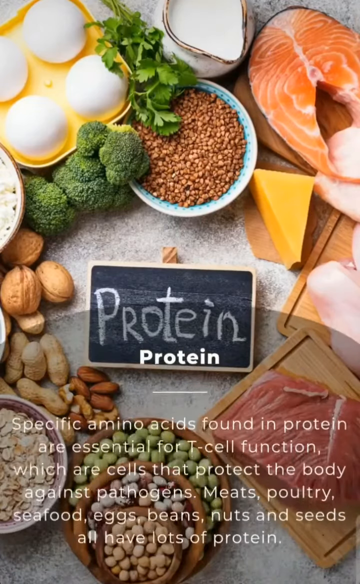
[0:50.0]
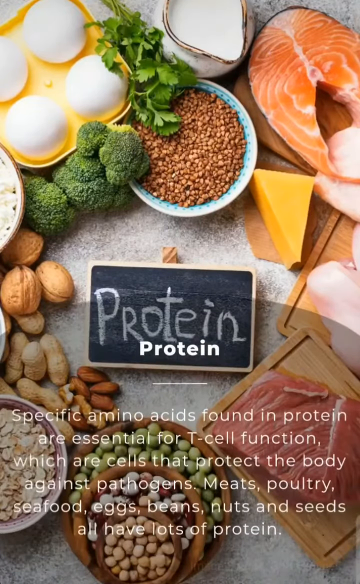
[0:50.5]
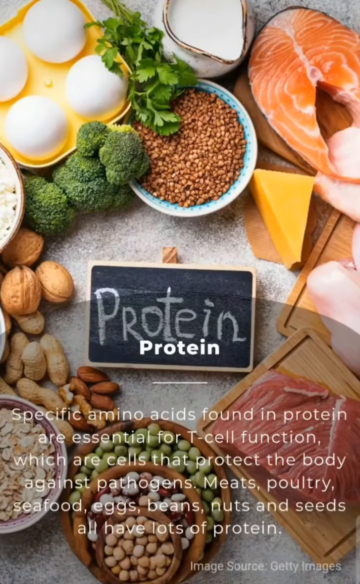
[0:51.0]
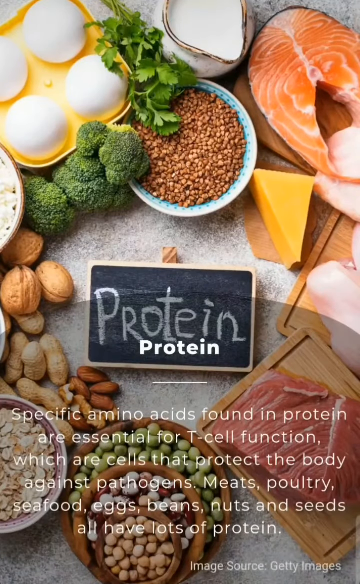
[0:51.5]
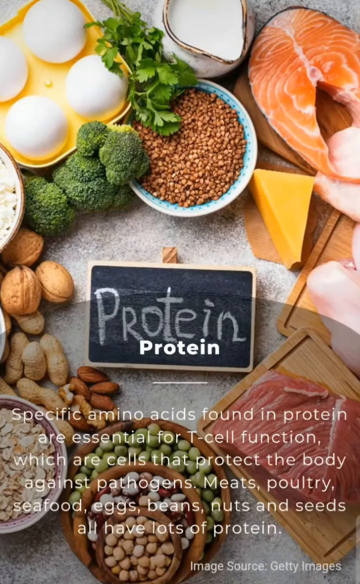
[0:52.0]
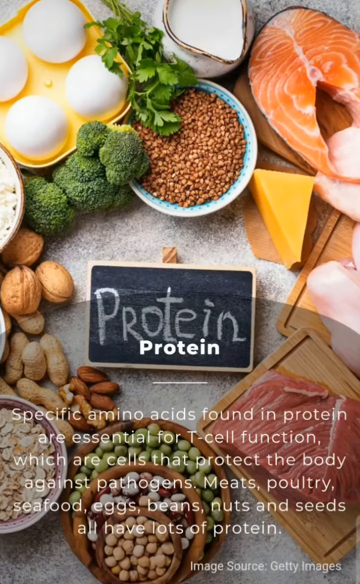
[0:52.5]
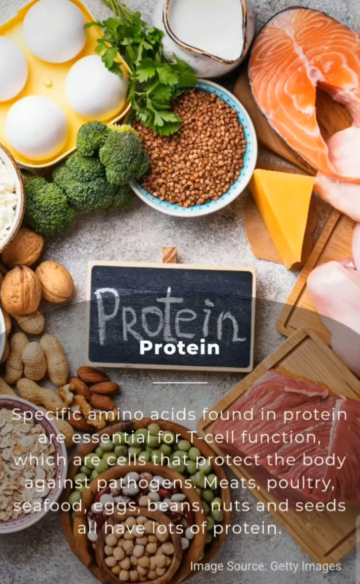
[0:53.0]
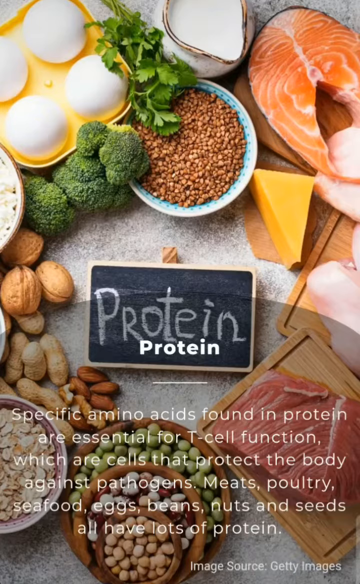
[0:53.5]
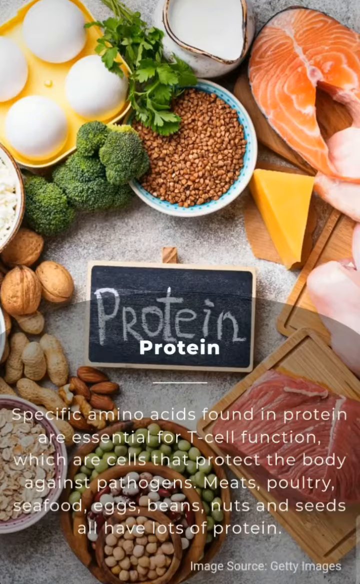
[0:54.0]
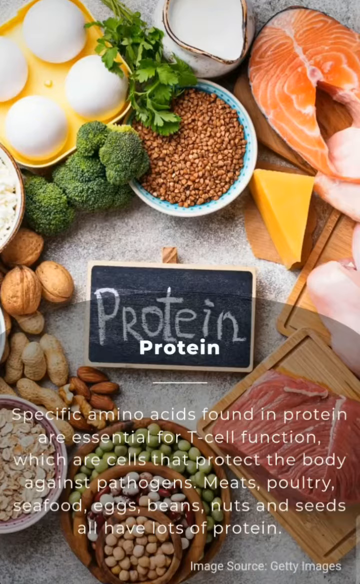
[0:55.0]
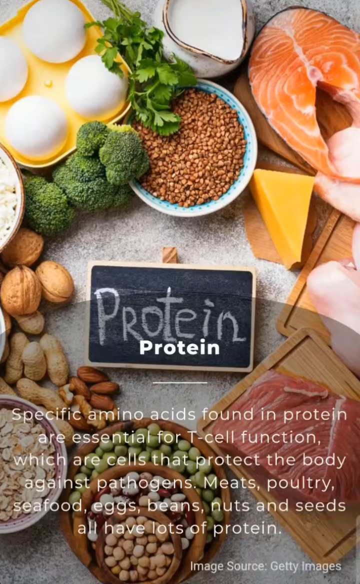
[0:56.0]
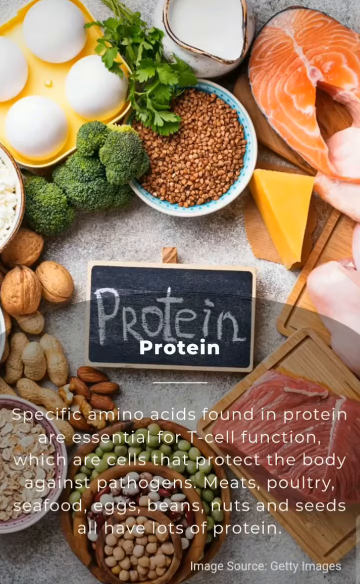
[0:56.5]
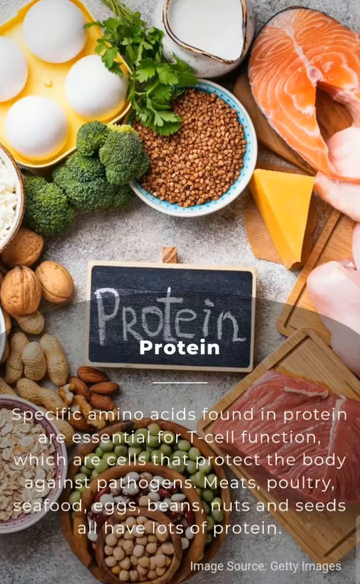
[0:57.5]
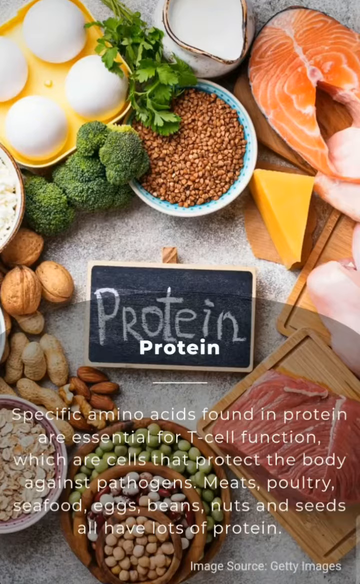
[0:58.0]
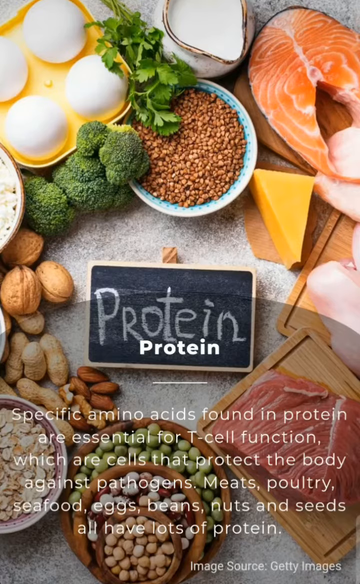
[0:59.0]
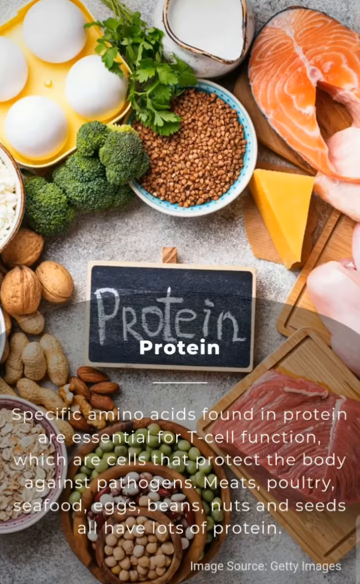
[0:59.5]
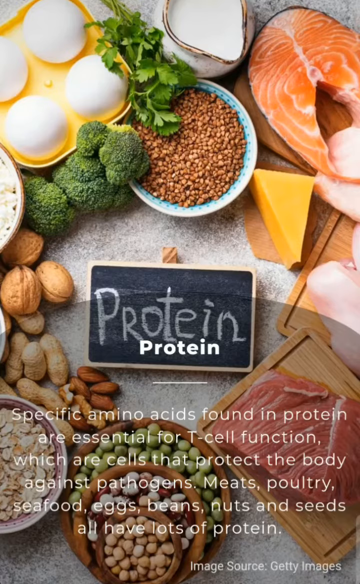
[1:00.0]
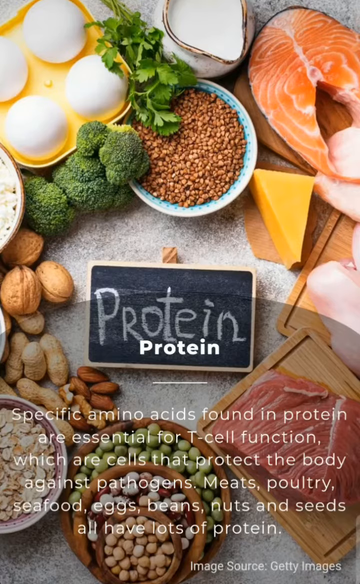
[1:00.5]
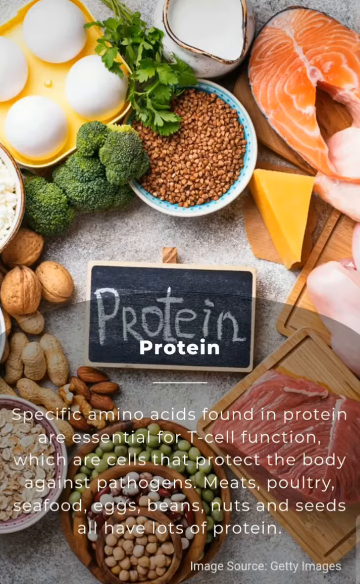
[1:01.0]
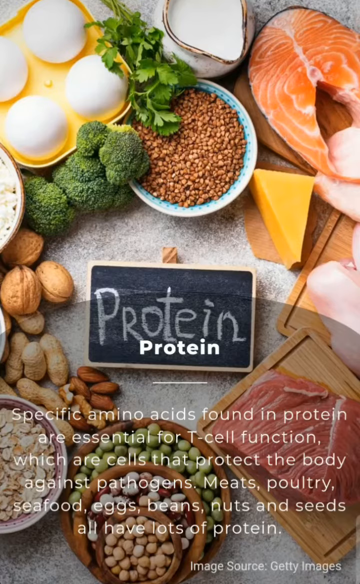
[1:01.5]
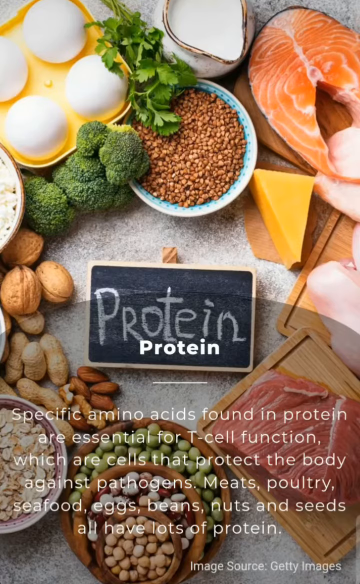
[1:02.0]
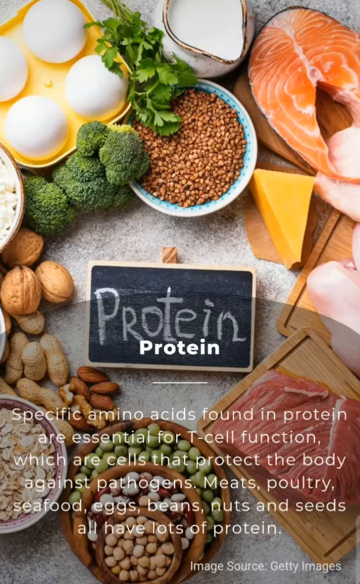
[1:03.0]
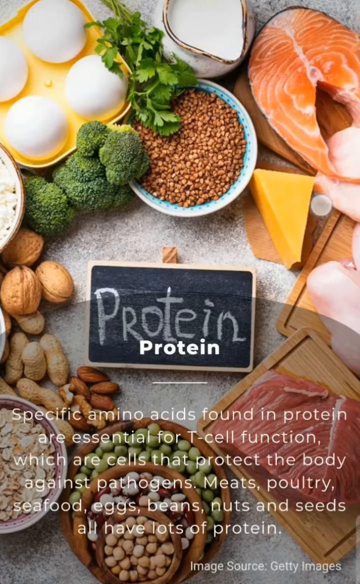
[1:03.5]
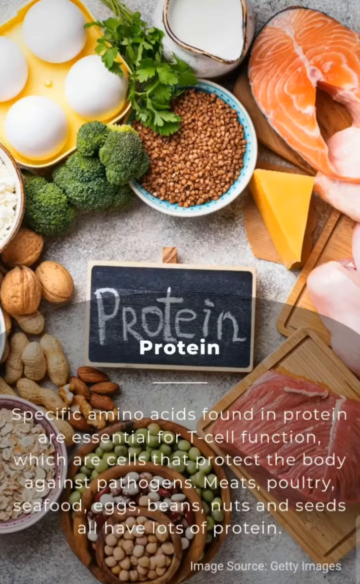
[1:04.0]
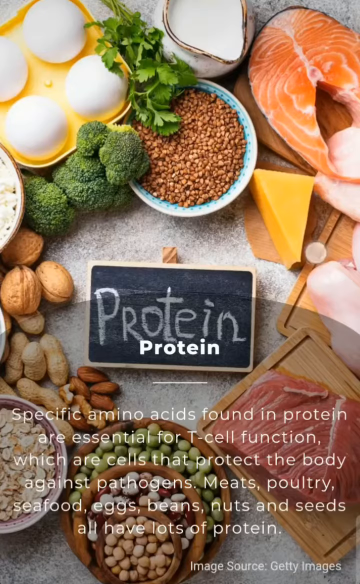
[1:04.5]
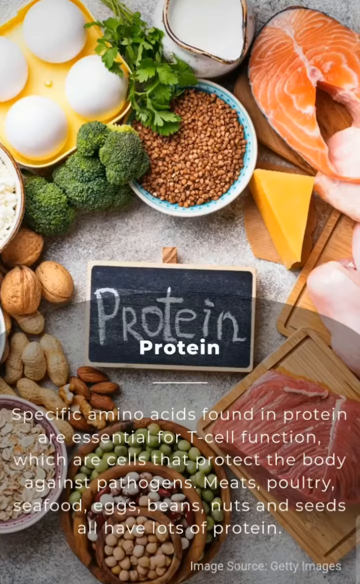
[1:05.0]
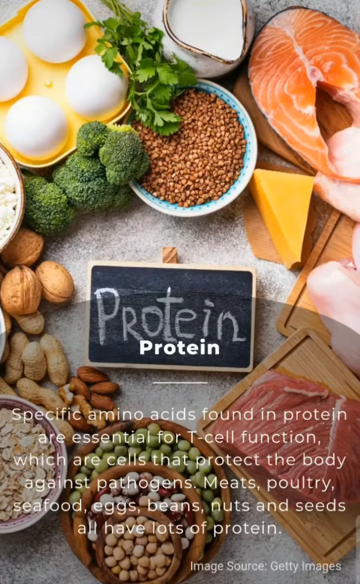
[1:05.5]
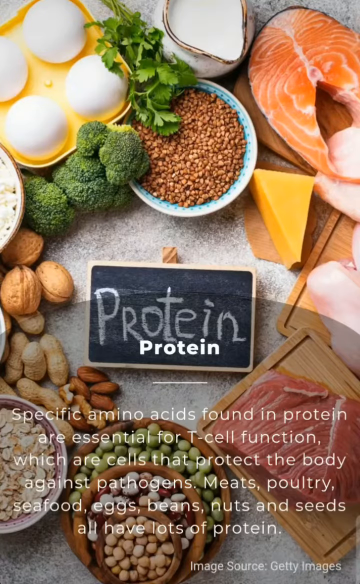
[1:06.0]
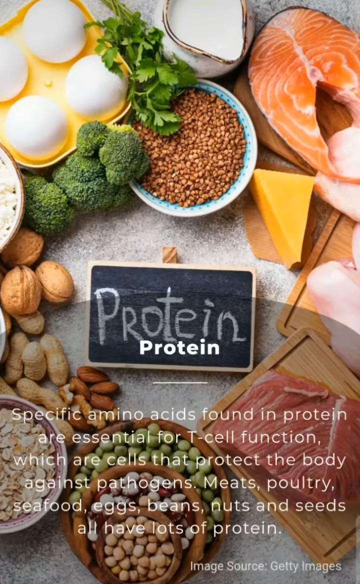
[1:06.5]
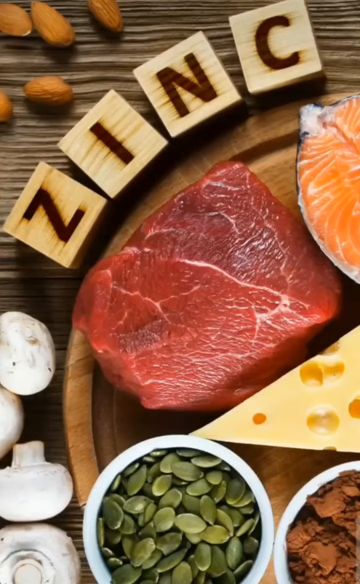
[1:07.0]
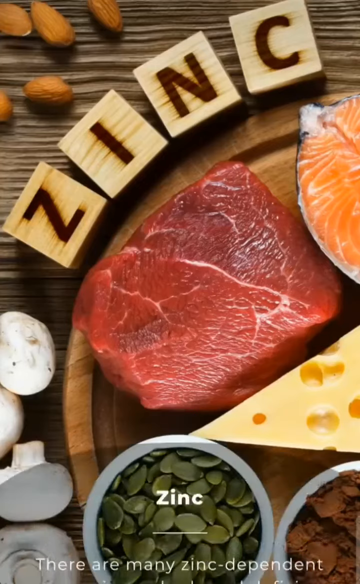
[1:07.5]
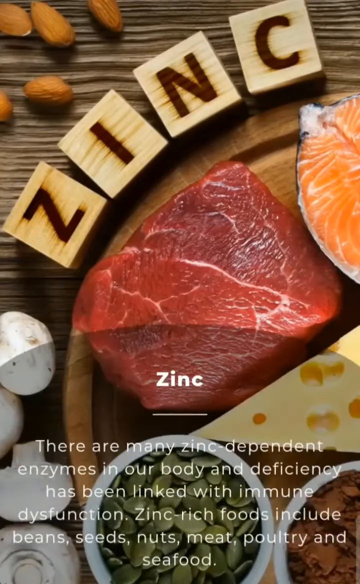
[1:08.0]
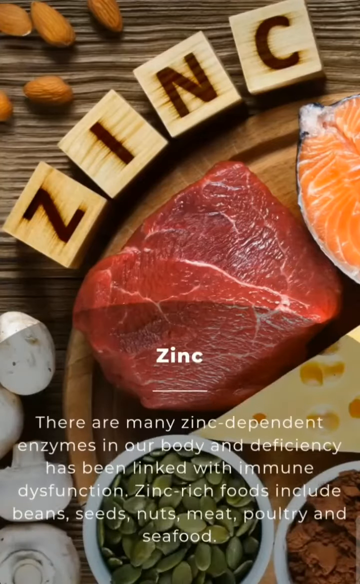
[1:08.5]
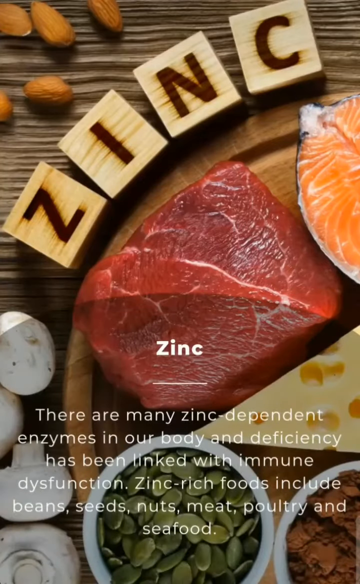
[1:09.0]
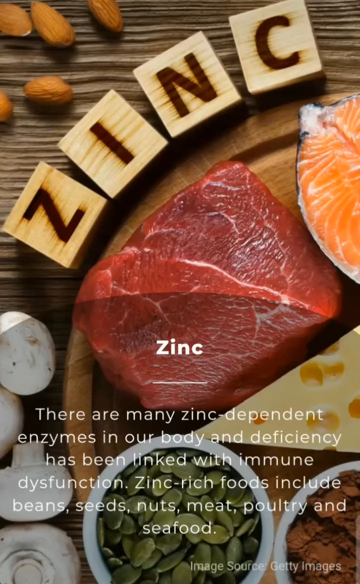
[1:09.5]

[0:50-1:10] The protein slide returns to the earlier format, with a blackboard in the middle of the screen and the word "protein" written on it in chalk. The text says "specific amino acids found in protein are essential for T cell function, which are cells that protect the body against pathogens. Meats, poultry, seafood, eggs, beans, nuts and seeds all have lots of protein." Surrounding the board is a big selection of foods that contain protein, apparently the biggest collection so far: another salmon fillet, more red meat that is some kind of beef, what looks like some kind of grain, a big block of cheese, peanuts, other big nuts, olives, cereals, eggs, broccoli, and milk. At the end, the zinc slide appears.